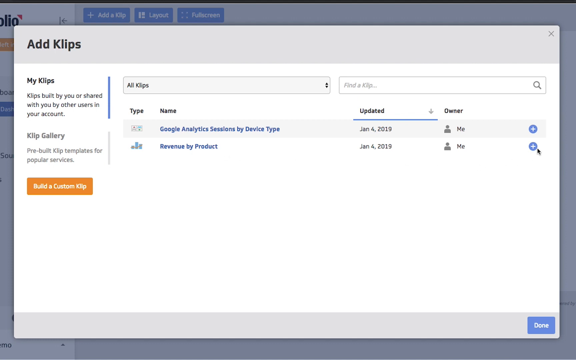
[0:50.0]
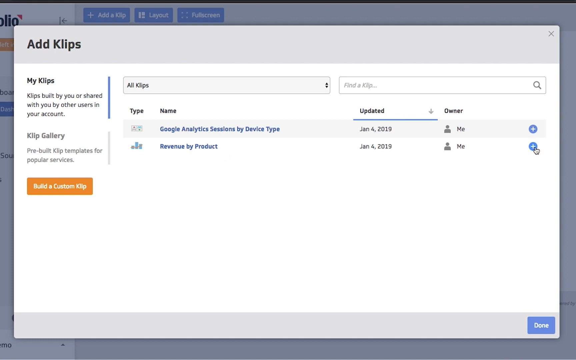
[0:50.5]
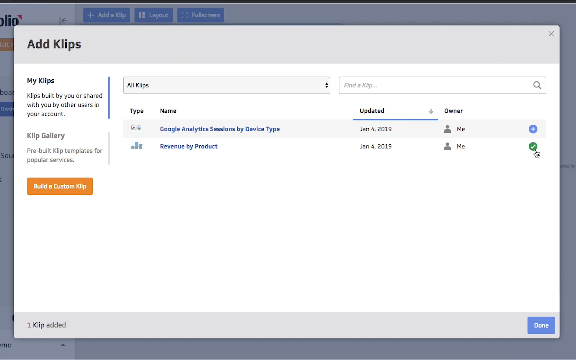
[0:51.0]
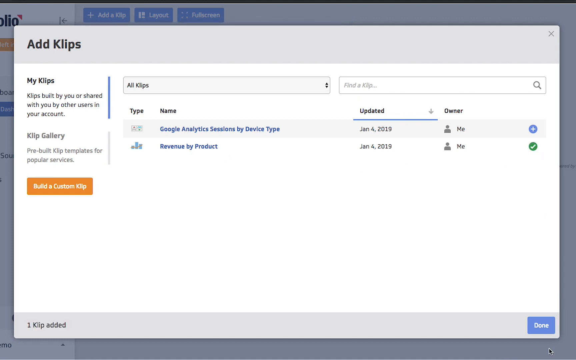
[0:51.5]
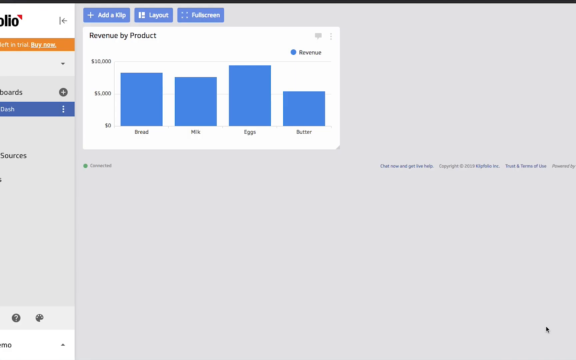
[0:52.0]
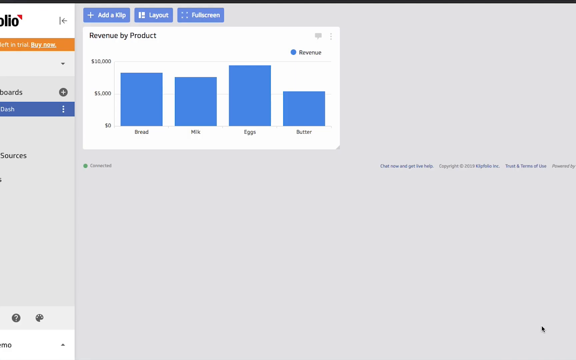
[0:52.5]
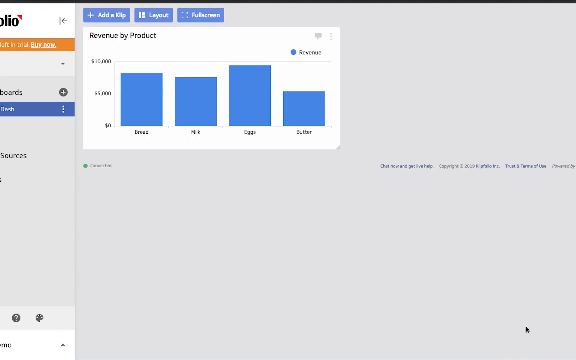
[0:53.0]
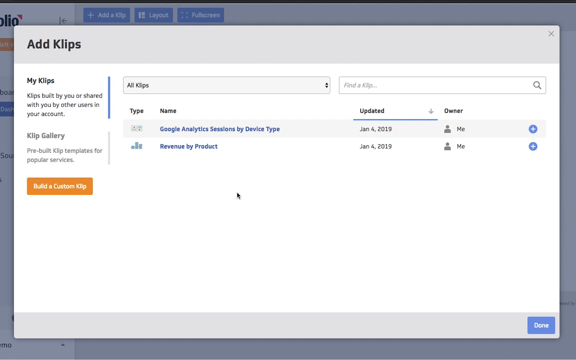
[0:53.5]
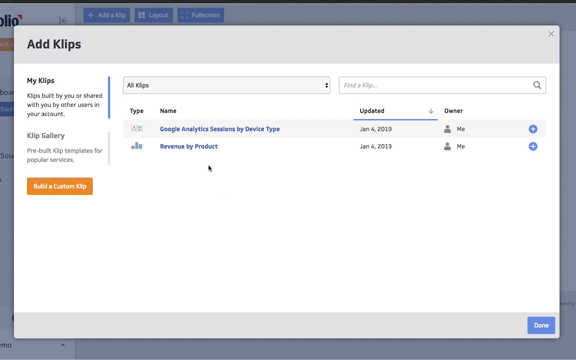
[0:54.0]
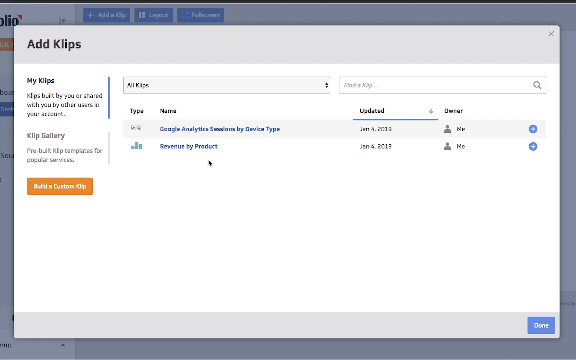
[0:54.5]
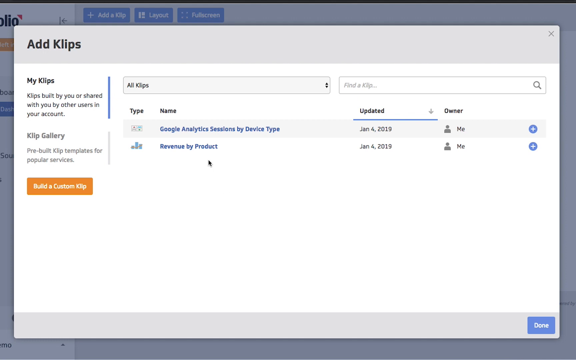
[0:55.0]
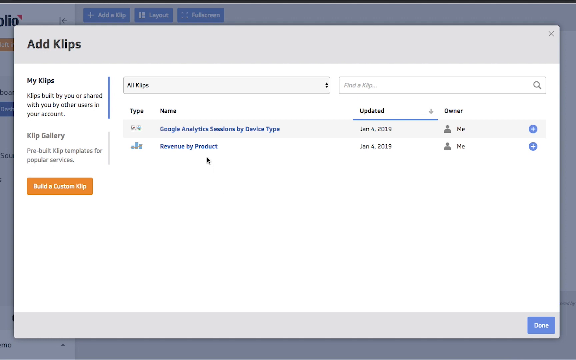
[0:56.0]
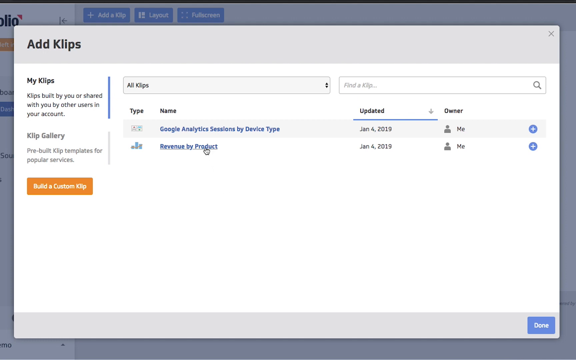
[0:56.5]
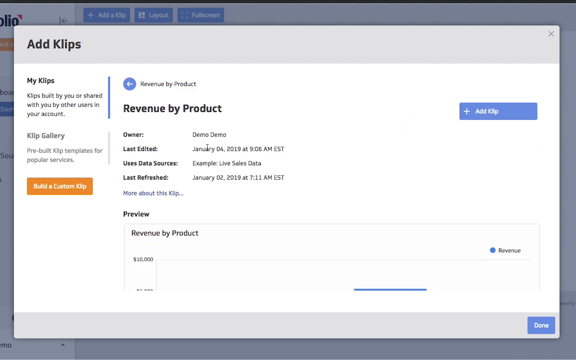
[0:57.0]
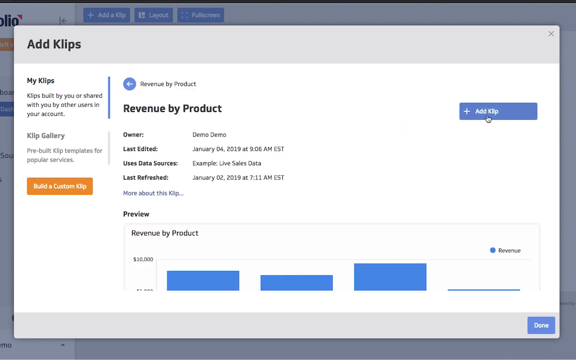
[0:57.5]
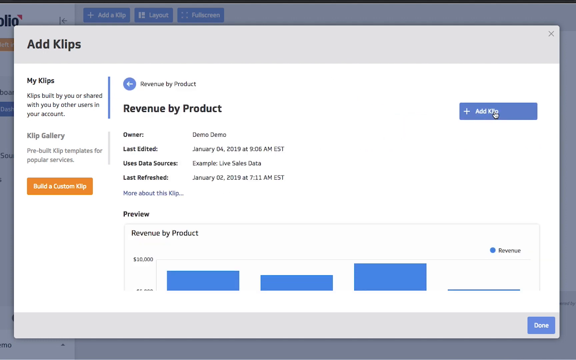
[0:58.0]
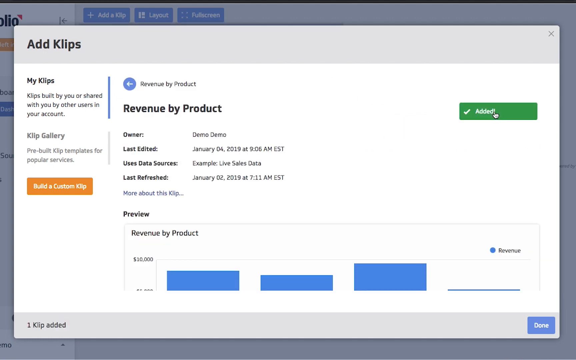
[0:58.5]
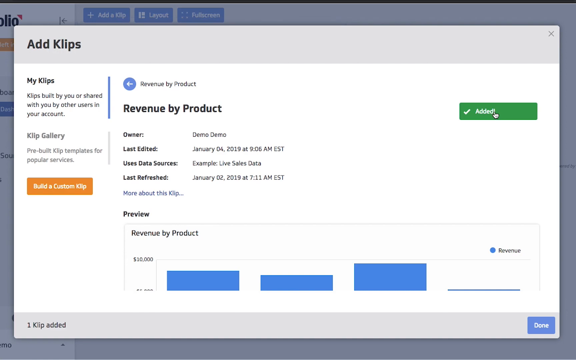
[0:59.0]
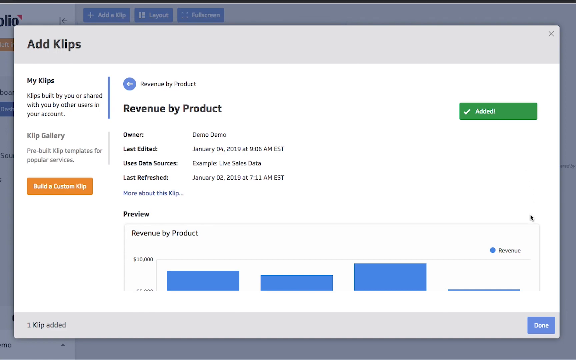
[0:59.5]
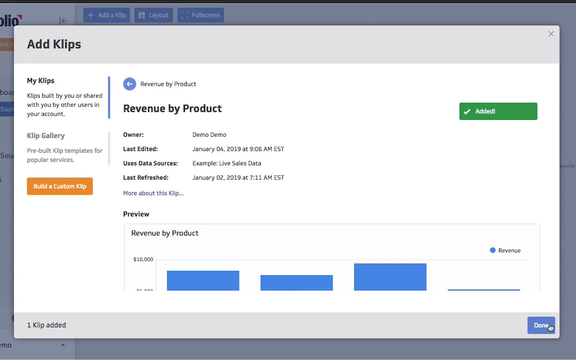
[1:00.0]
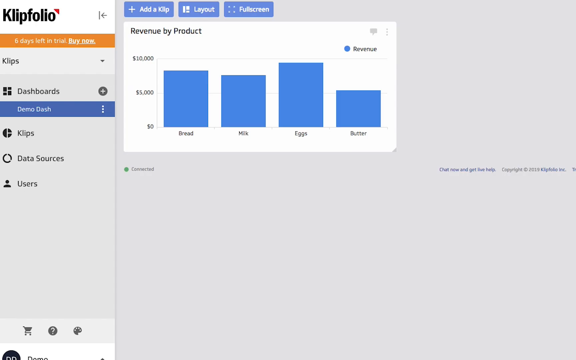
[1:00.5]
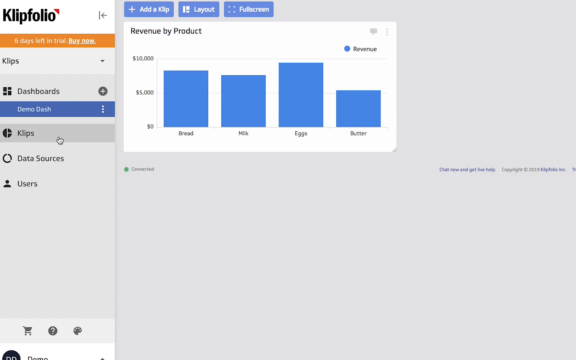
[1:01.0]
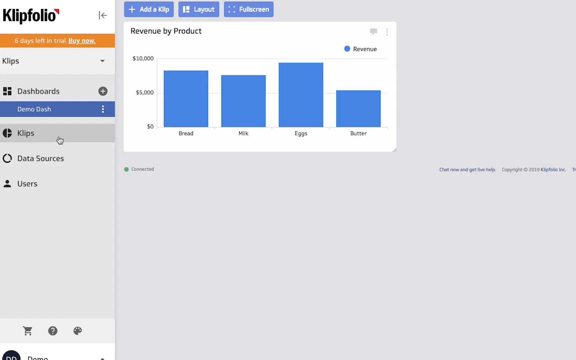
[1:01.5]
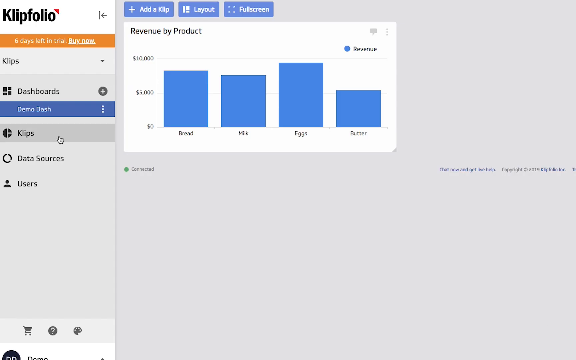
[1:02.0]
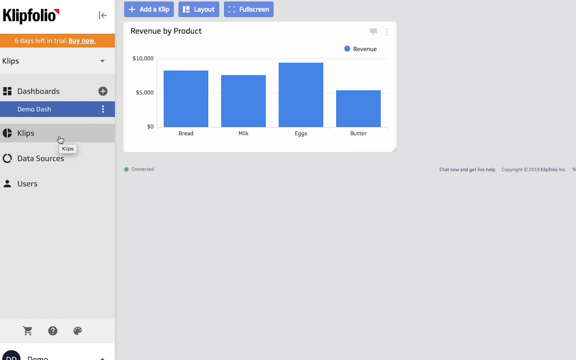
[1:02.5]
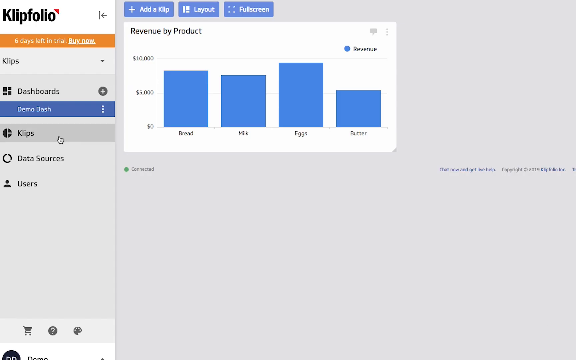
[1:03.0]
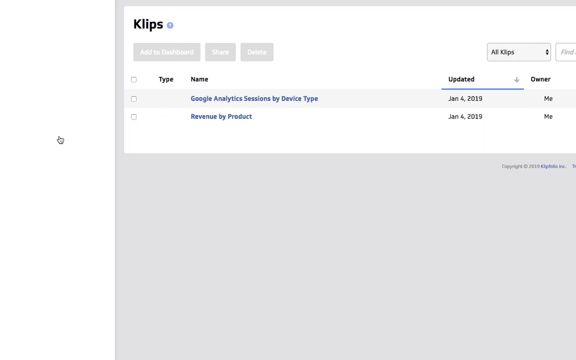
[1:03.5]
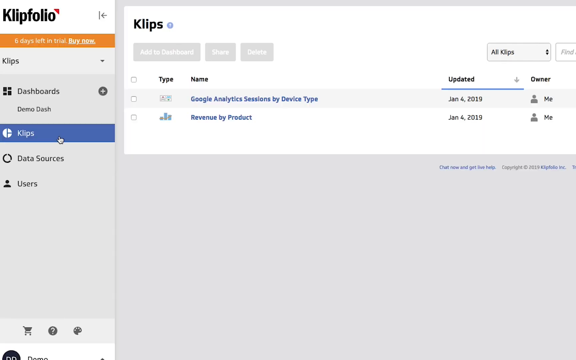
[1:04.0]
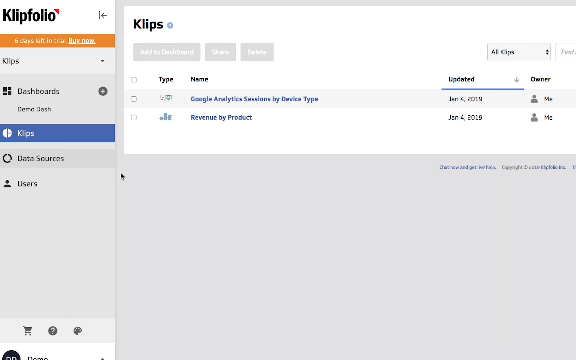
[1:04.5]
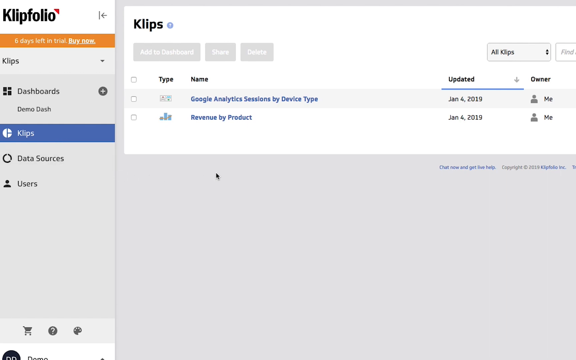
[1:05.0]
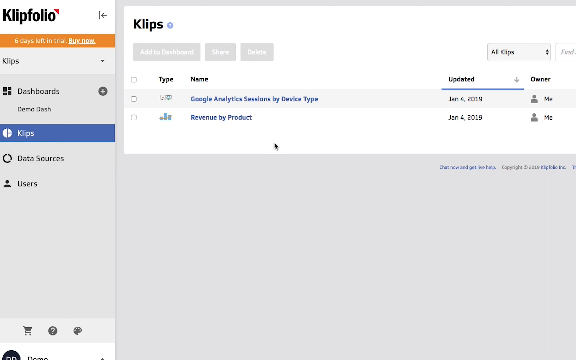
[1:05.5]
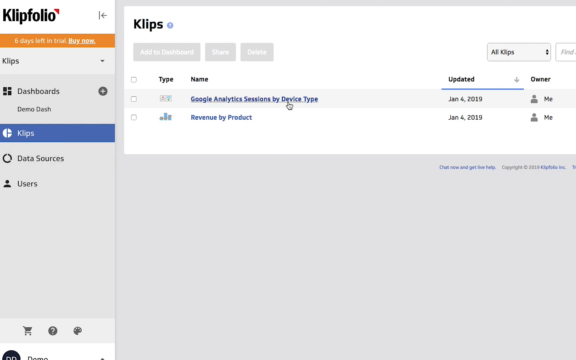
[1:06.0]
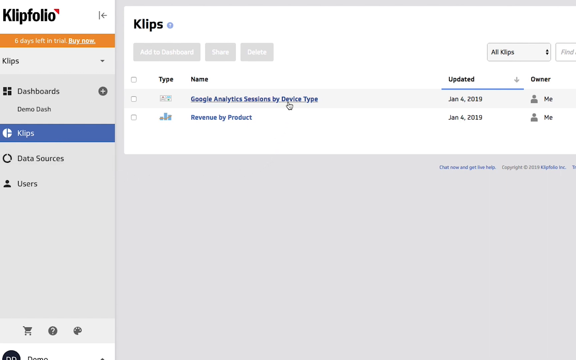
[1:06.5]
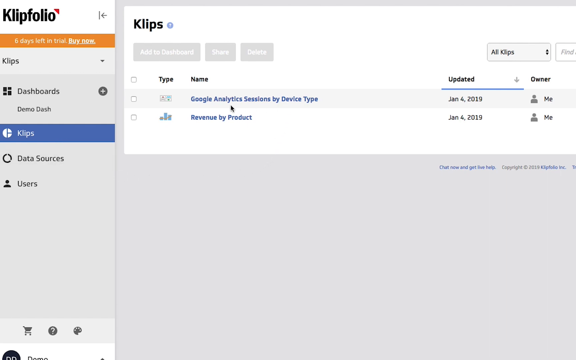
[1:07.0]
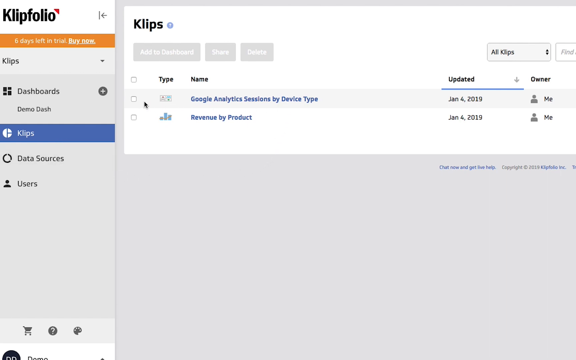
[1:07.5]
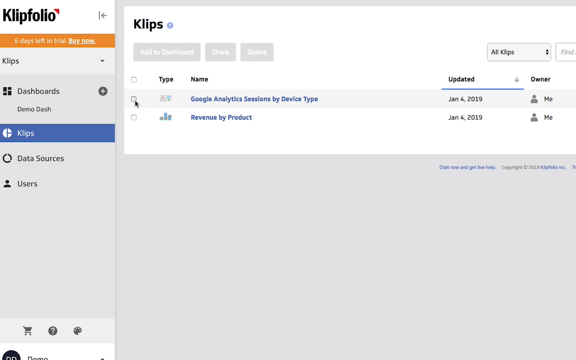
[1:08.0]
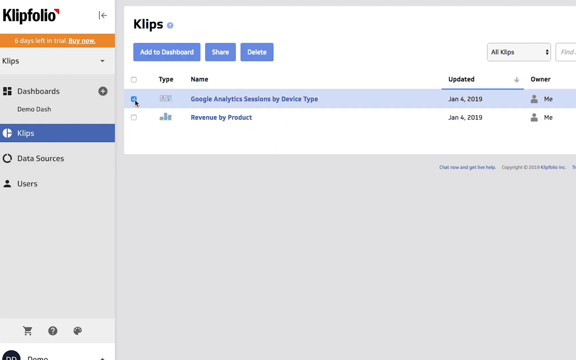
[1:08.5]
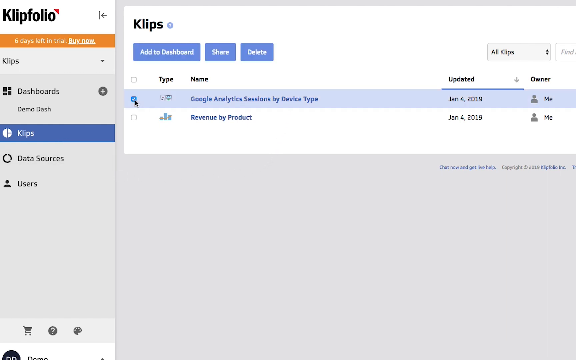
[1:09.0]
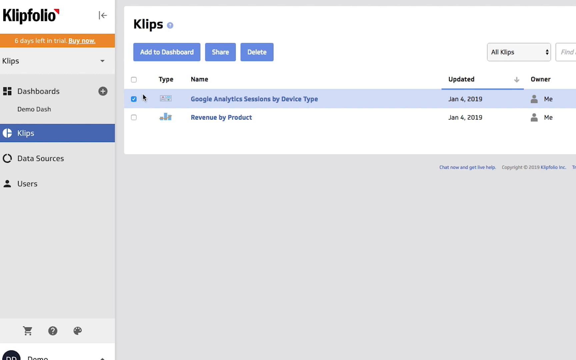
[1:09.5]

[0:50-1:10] Blocks appear, including "revenue by product" and "add file," which then turns green and shows "added." Various other items are shown. The person clicks on clip again, where there is a Google Analytics option, and clicks on it. Google Analytics is apparently built into Klipfolio.